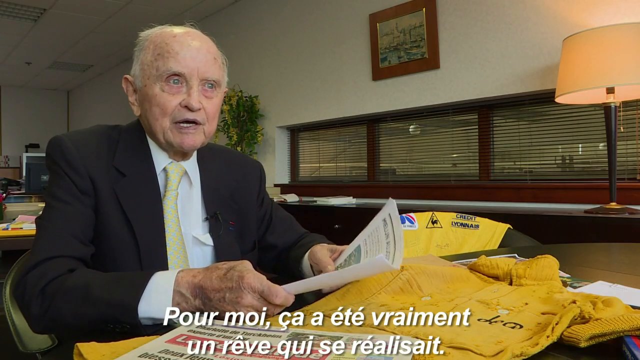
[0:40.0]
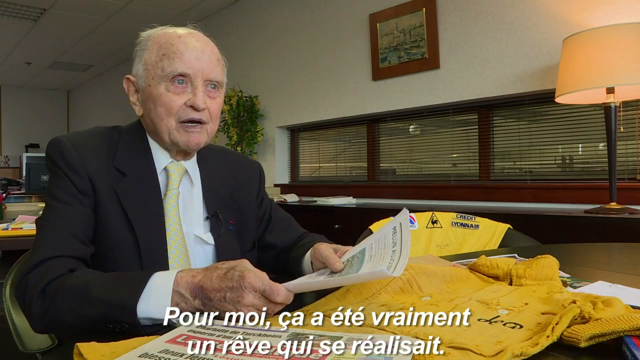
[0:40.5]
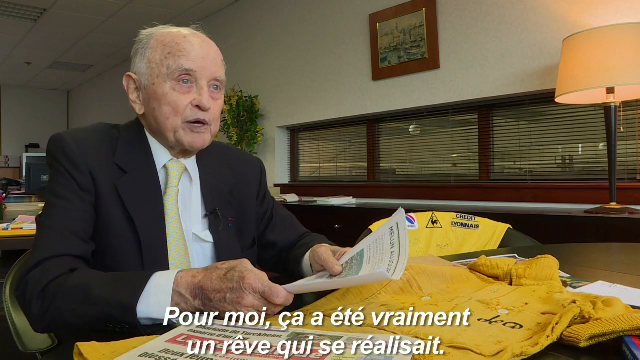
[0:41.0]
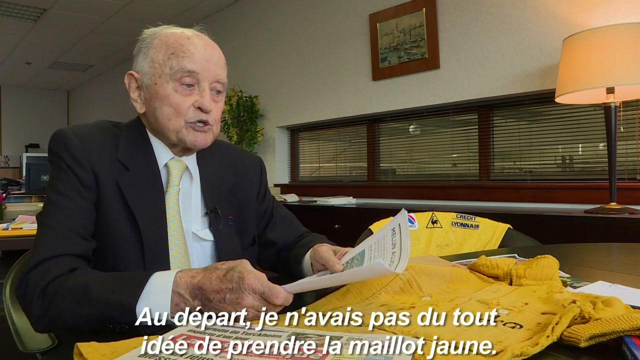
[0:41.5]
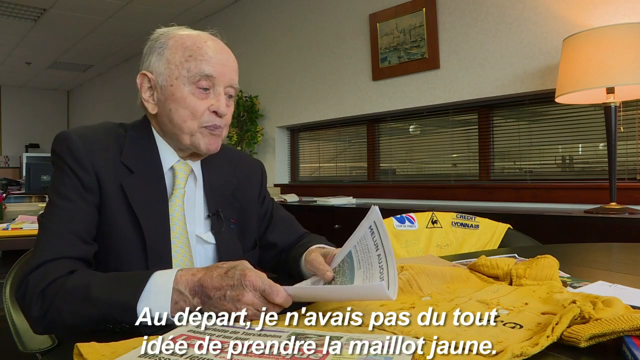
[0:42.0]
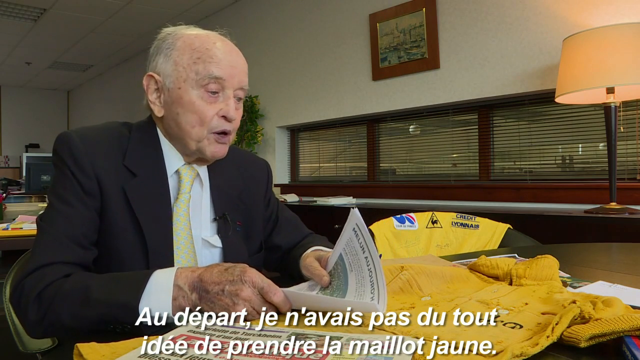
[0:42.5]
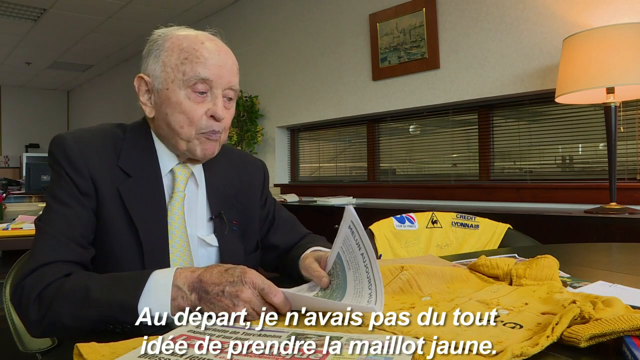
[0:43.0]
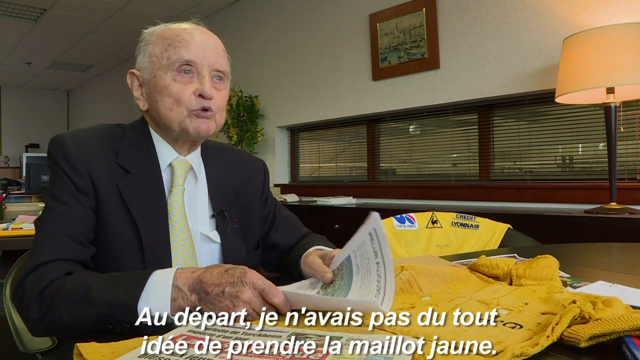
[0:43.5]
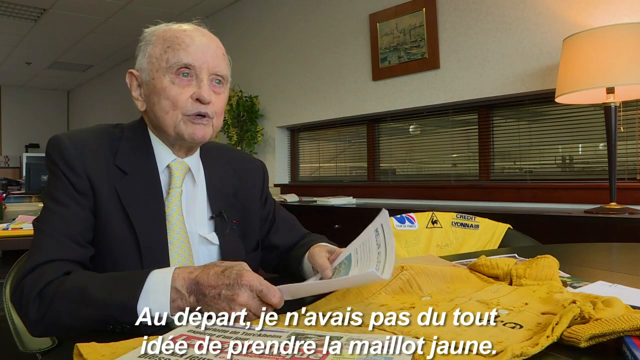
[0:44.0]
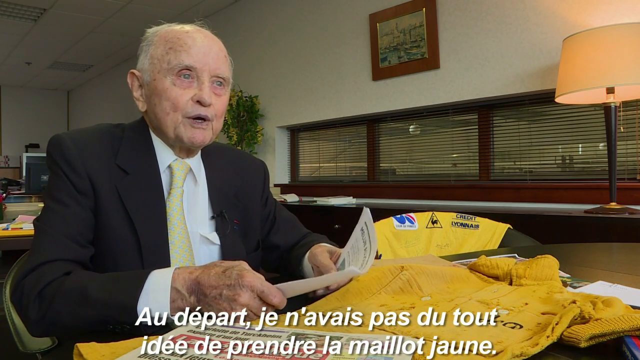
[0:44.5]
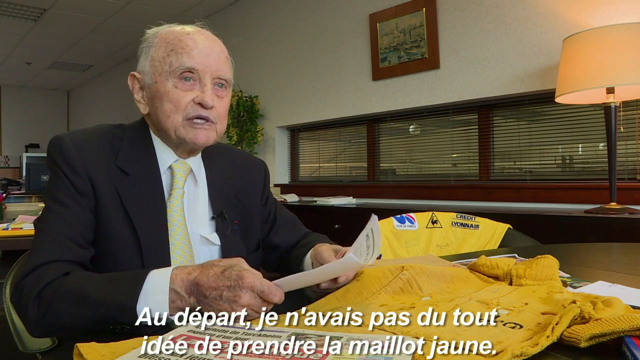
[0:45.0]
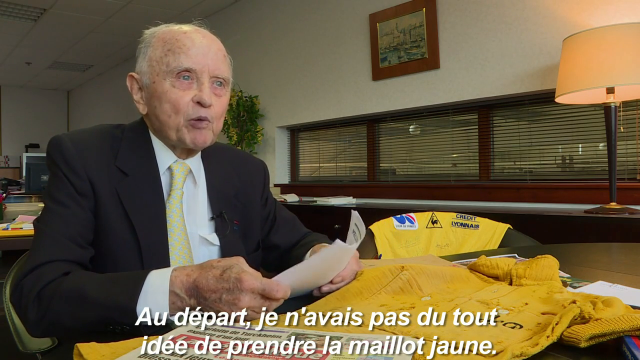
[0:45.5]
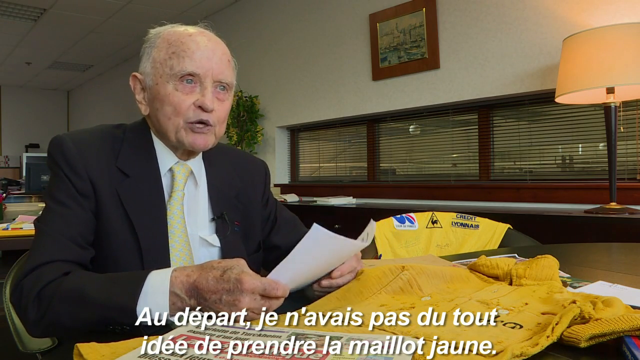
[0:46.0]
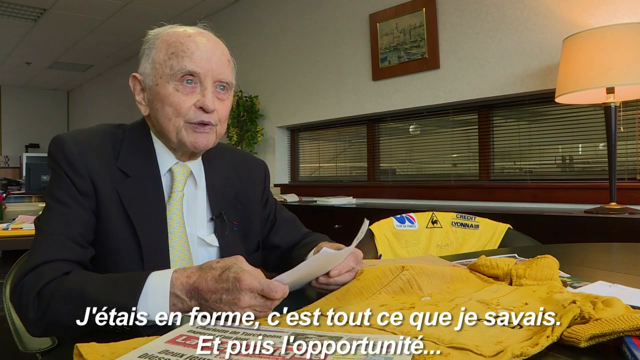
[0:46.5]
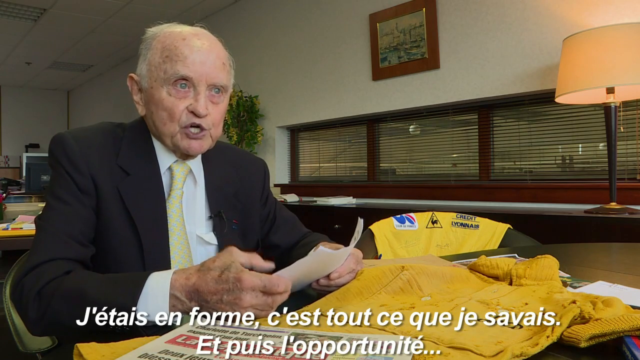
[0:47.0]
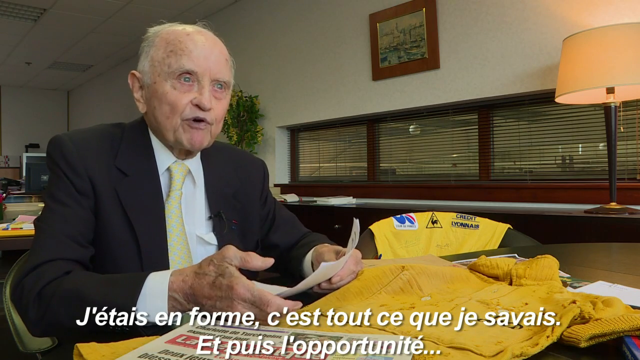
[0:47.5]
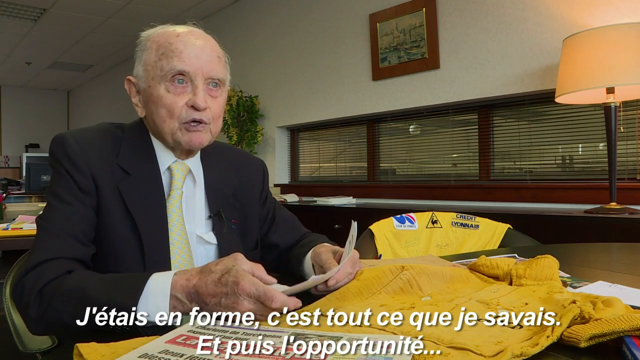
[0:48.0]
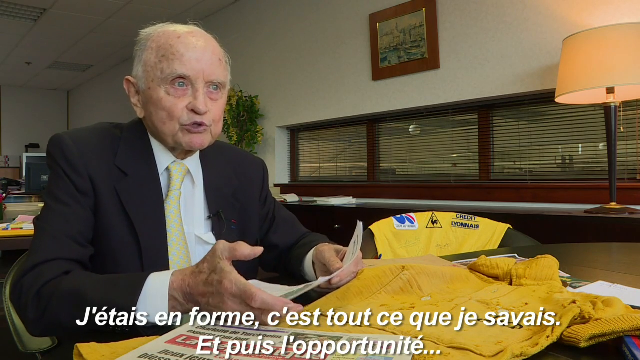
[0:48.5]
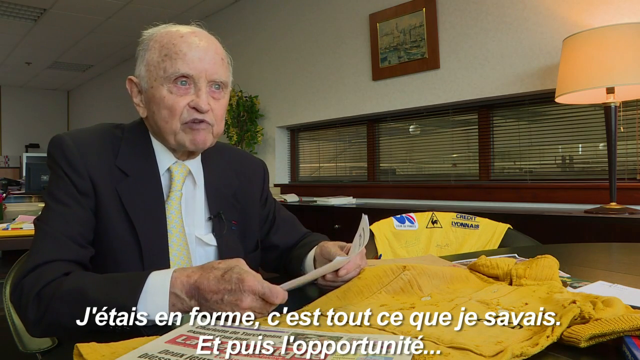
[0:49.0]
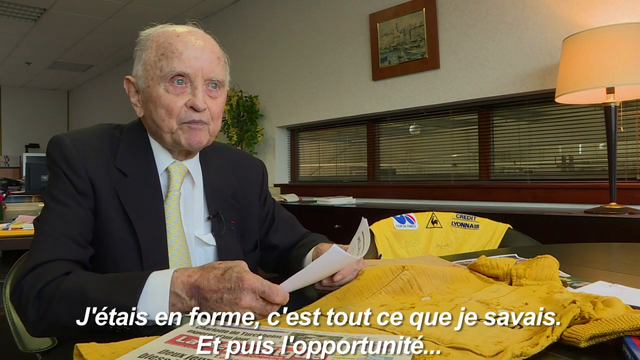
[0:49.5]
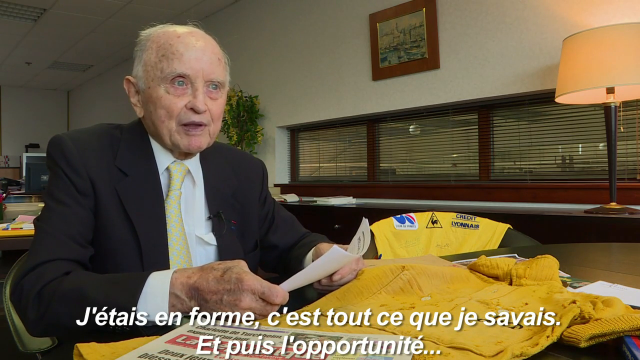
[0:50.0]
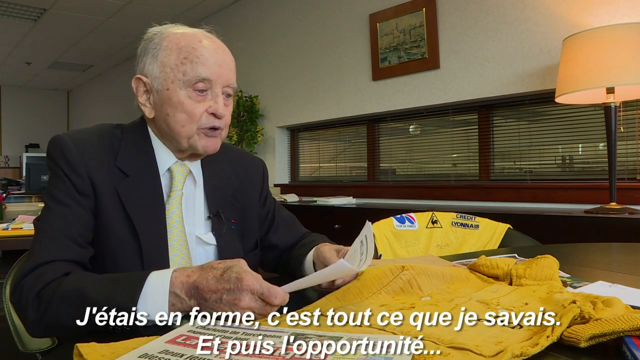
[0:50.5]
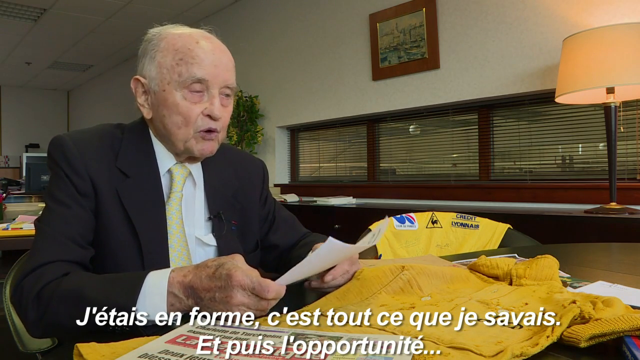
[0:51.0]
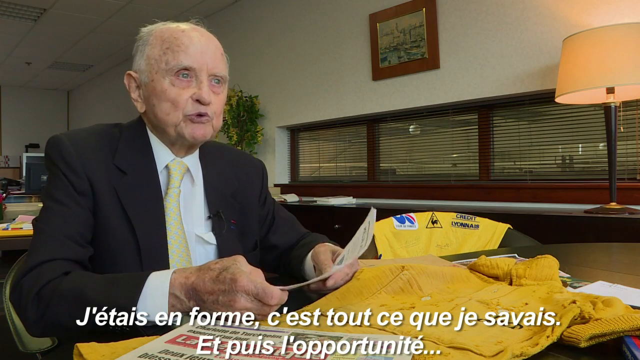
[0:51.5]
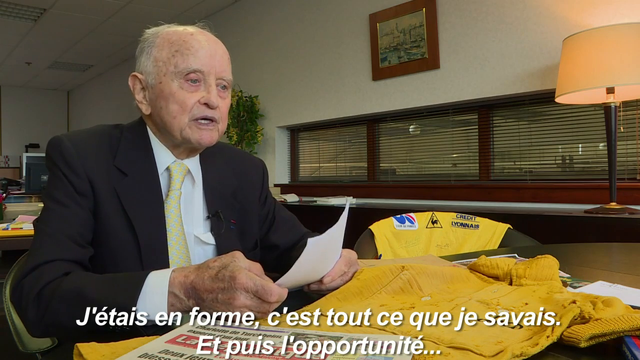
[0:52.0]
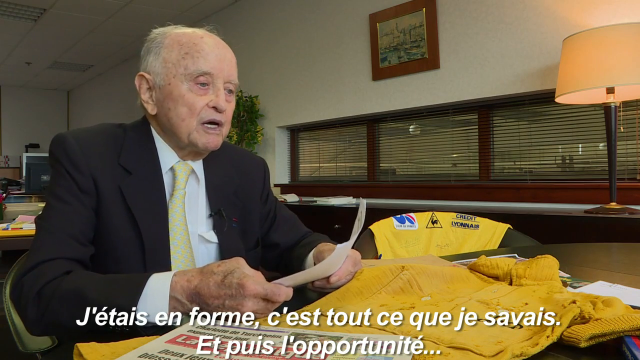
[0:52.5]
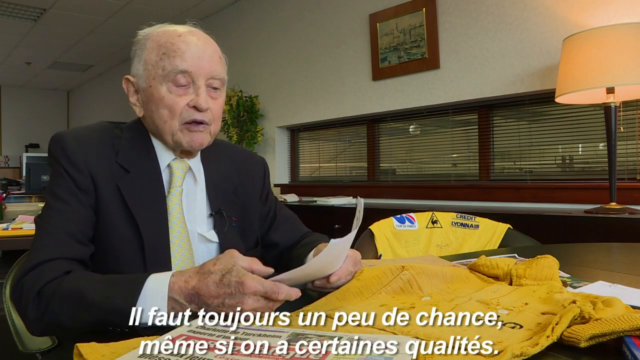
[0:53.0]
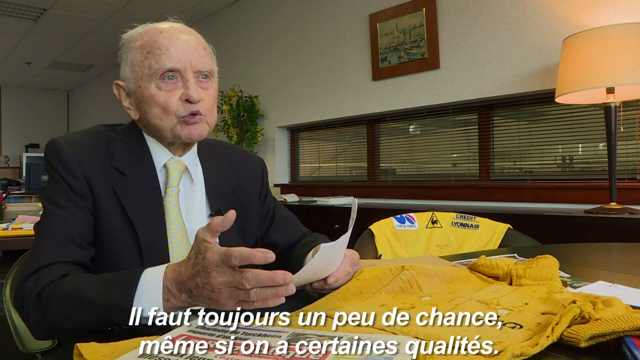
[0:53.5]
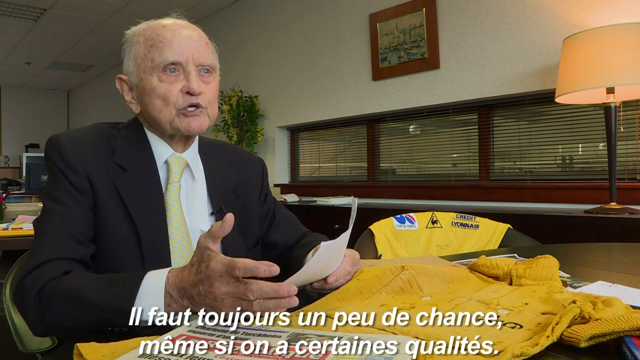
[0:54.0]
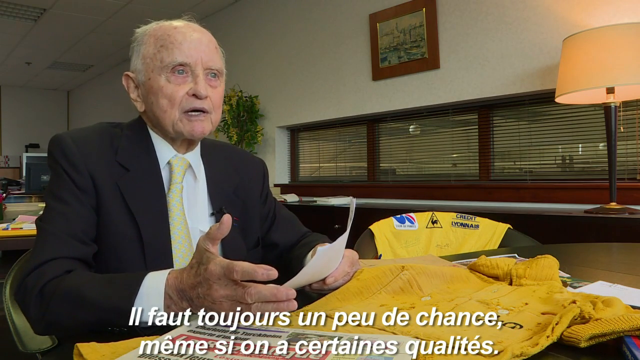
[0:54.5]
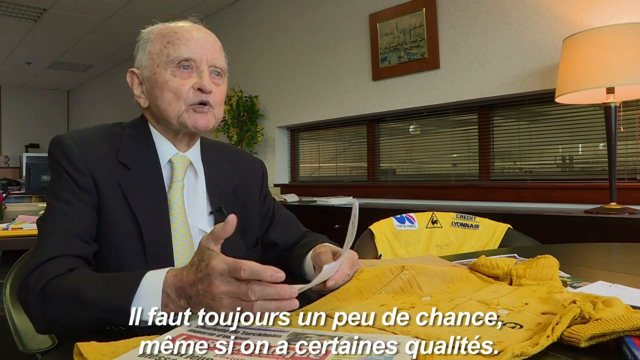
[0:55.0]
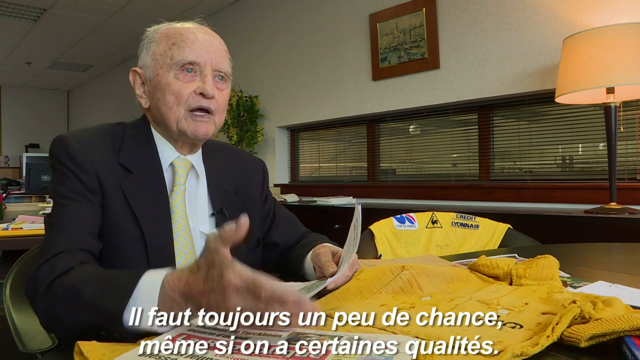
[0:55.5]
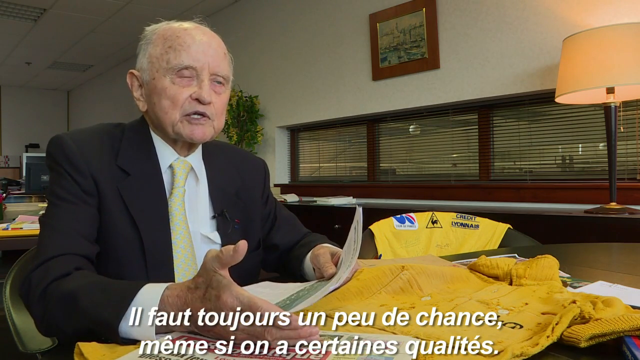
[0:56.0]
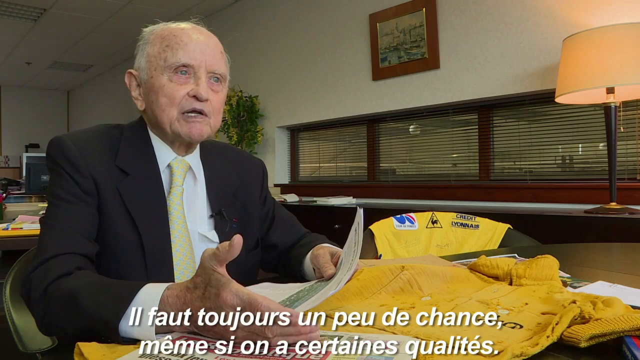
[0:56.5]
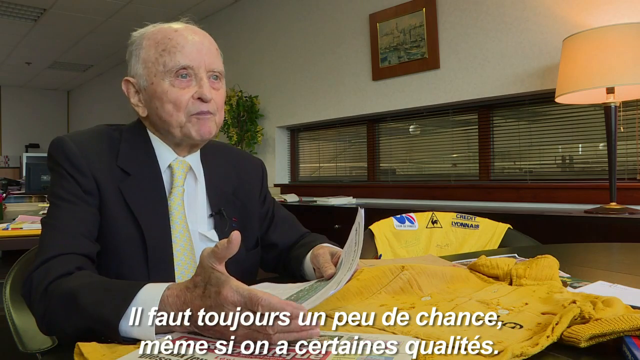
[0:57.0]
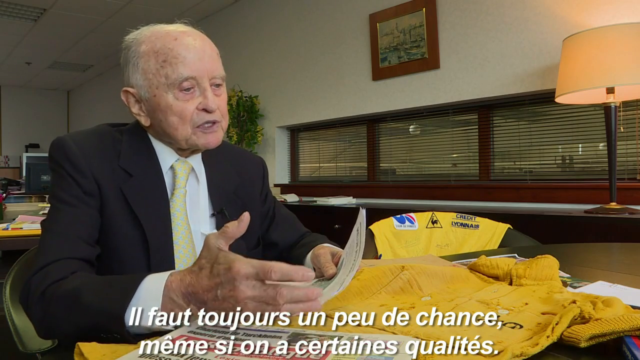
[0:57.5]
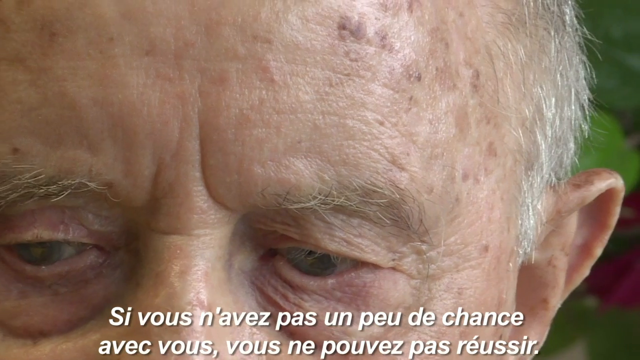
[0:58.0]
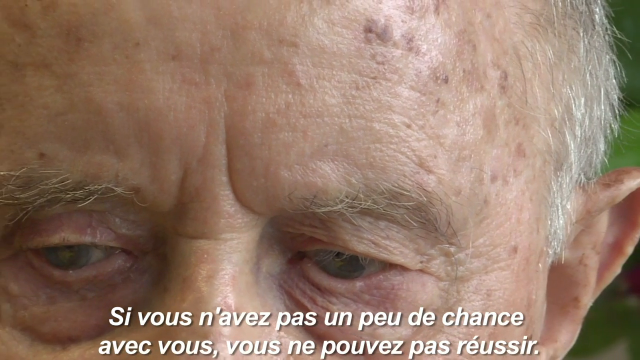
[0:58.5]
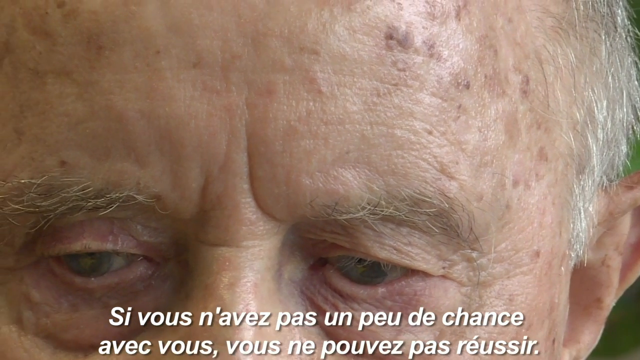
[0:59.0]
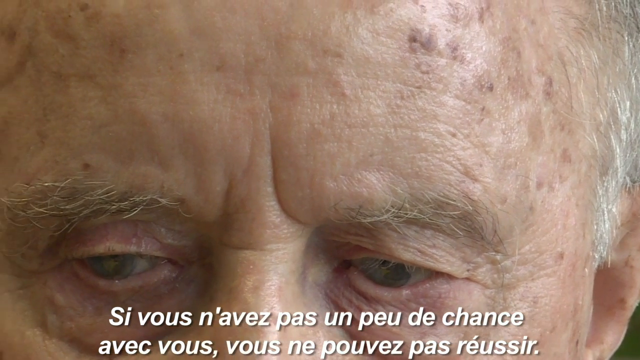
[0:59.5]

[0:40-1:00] The old man is still sitting on the left side, facing forward and turned slightly right. The white wall is behind him, a desk is behind him on the left side, and the plant is just over his right shoulder. Down from the plant, four windows stretch across with blinds halfway open, and above that is a picture. On the right side is a lamp that is turned on, with a white shade and a brown leg and base. The older man has sunspots on his head, is balding on top and gray on the sides, and wears a white shirt, a cream-colored tie and a dark jacket. In front of him is the table with the yellow shirt on it, and another chair above the table has a yellow shirt over it. He holds a white piece of paper, his arms bent at the elbows down to the table, as he talks off to the right. He looks down at the shirts while talking, then back up to the right, holding the paper the whole time. He moves his right hand off the paper a little, opens it and kind of gestures, then goes back to holding the paper. He looks down at the table, back up, and down at the table again, then extends his hand, the back of it toward the camera, as he continues talking. He looks down to the right and the camera closes in on his head, showing just his eyes, his ear on the right side and a little hair on the right; the top of his head is cut off, and the frame is cut off at the bottom of his eyes. The view slowly pans to the left. Throughout, white foreign-language text runs across the bottom; it looks to be French or maybe Italian.